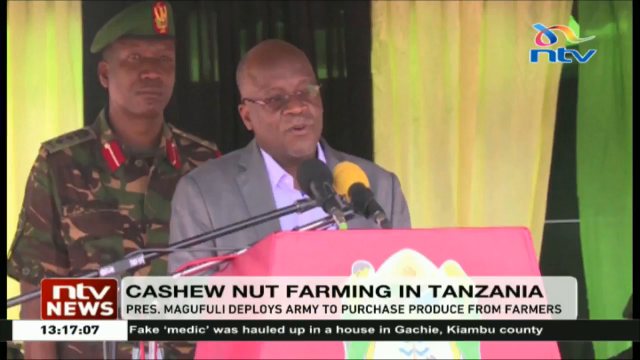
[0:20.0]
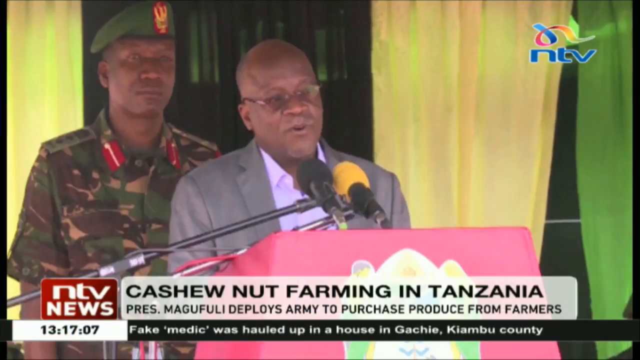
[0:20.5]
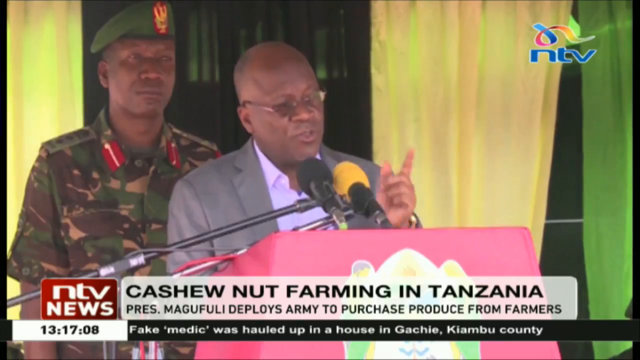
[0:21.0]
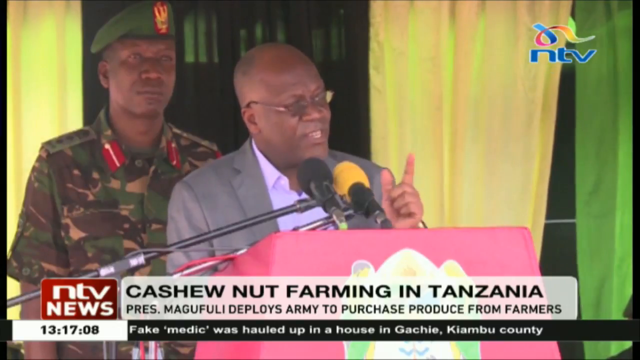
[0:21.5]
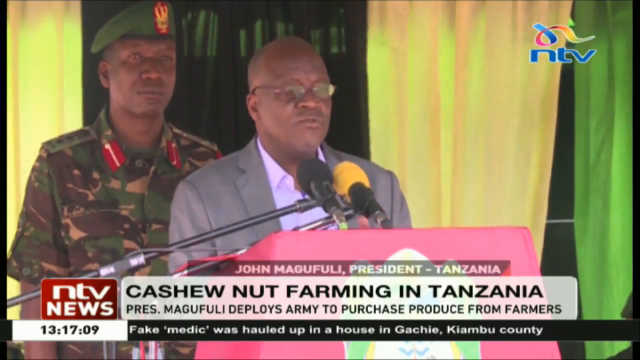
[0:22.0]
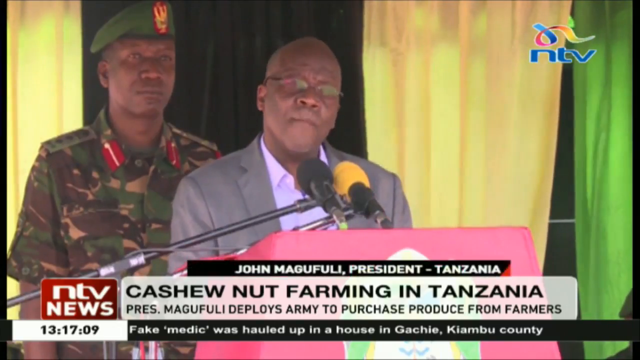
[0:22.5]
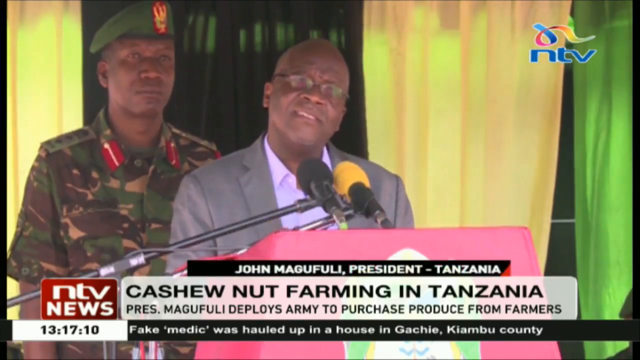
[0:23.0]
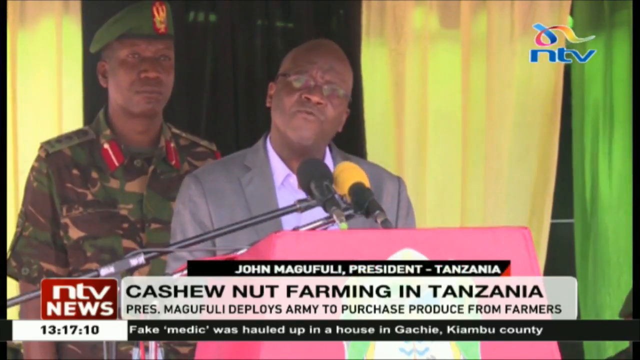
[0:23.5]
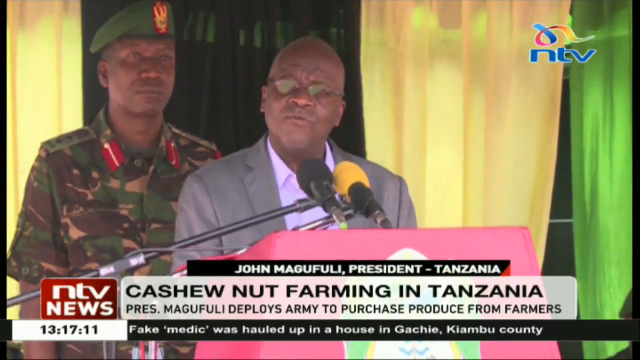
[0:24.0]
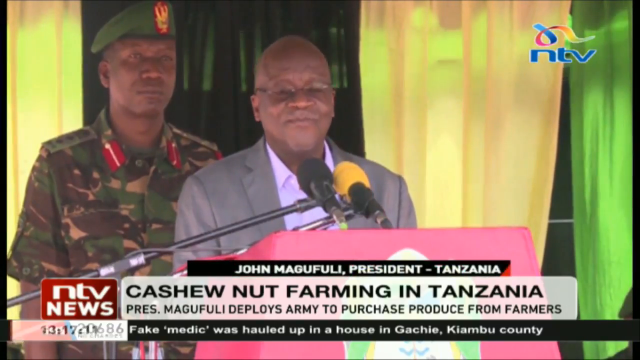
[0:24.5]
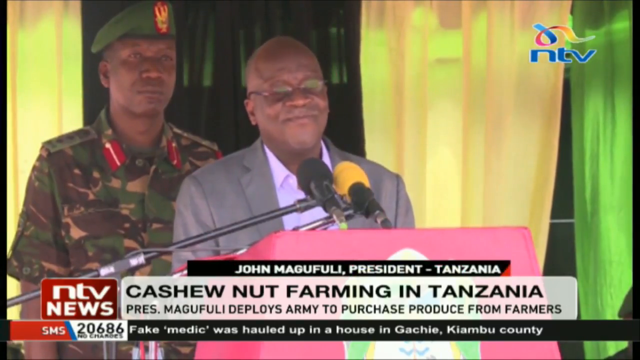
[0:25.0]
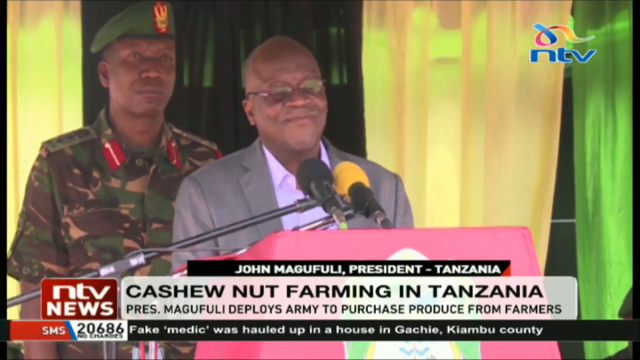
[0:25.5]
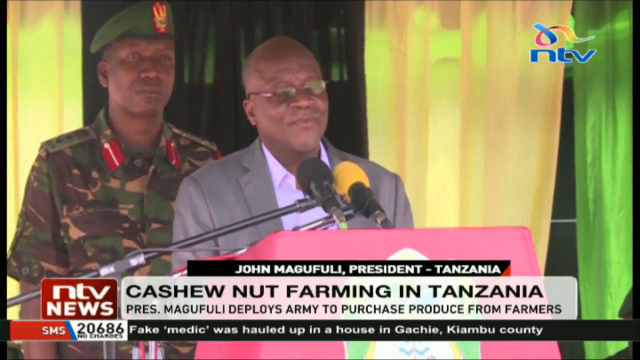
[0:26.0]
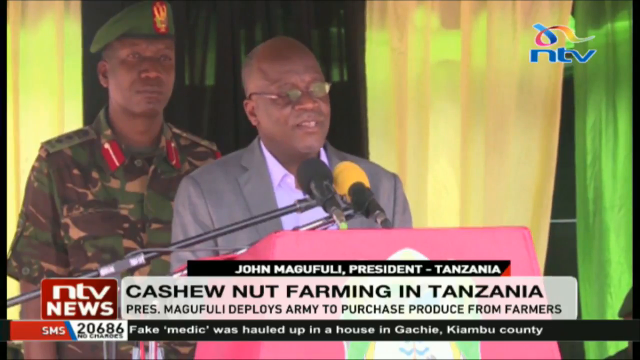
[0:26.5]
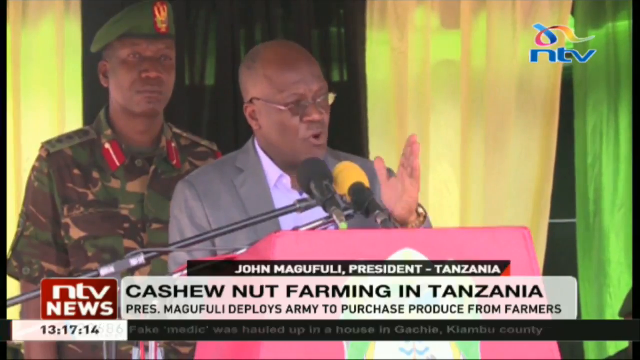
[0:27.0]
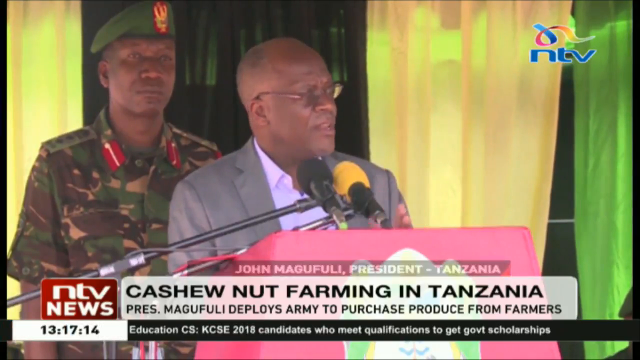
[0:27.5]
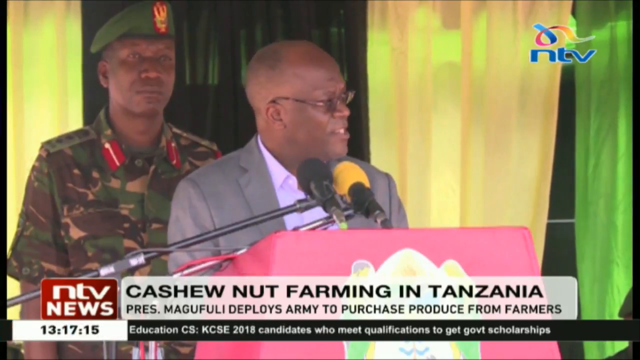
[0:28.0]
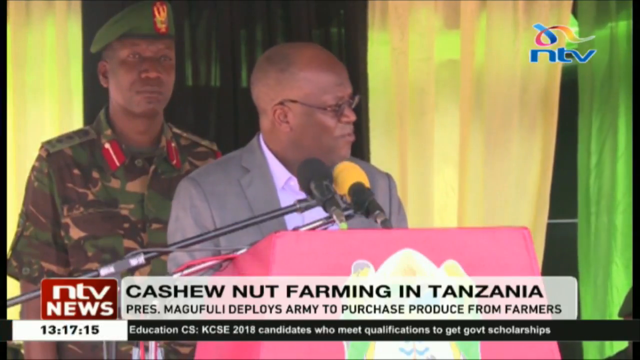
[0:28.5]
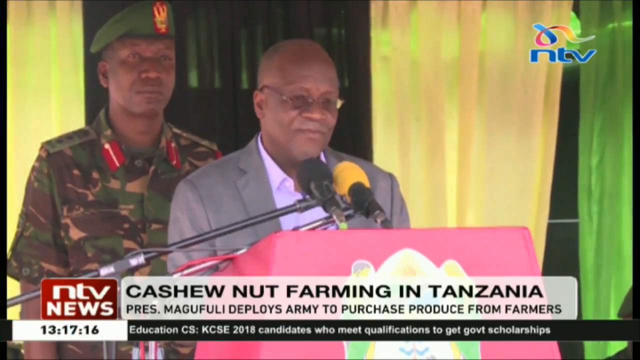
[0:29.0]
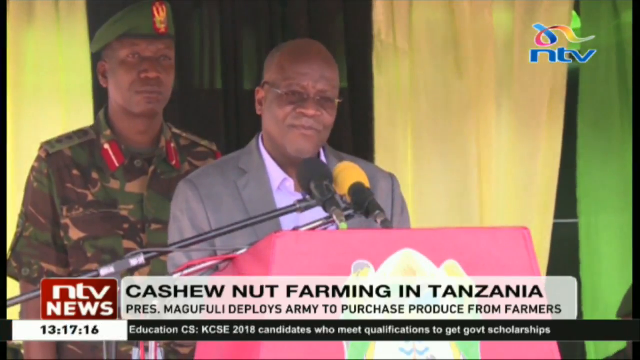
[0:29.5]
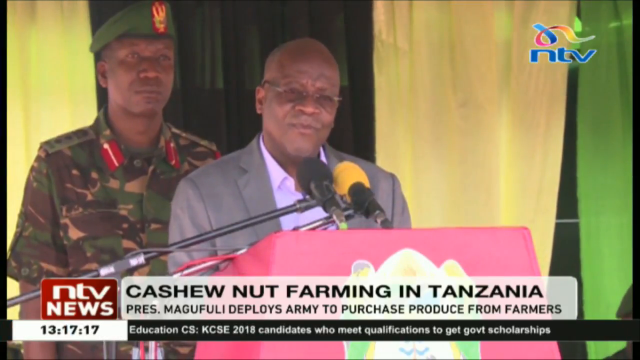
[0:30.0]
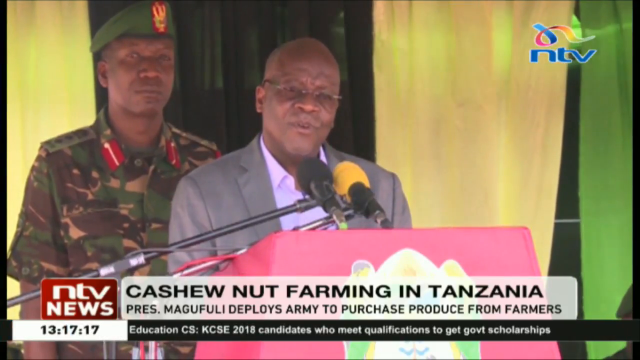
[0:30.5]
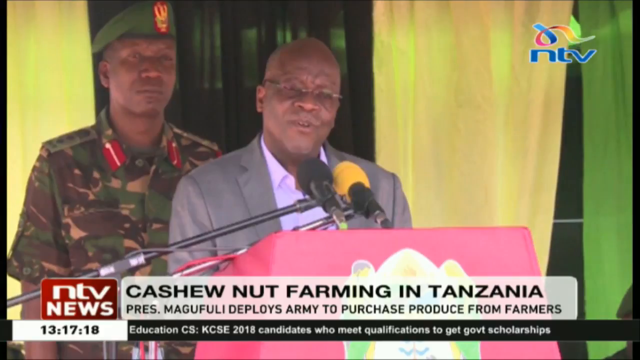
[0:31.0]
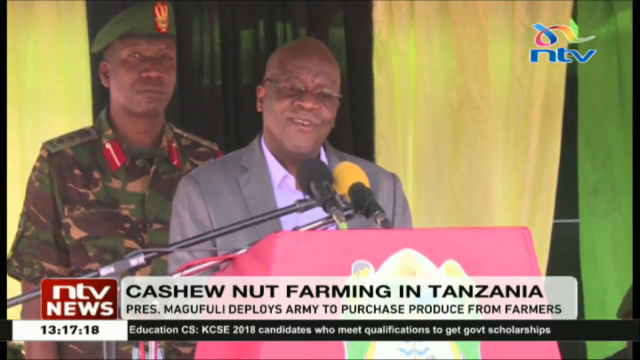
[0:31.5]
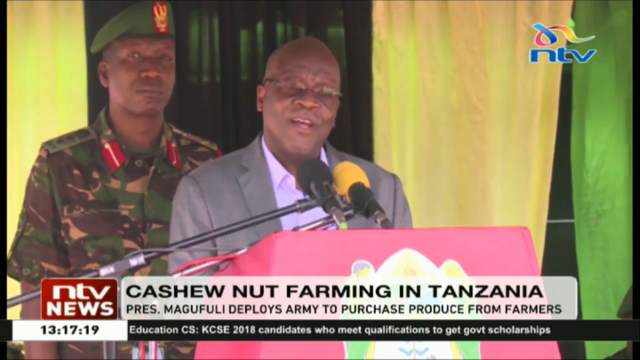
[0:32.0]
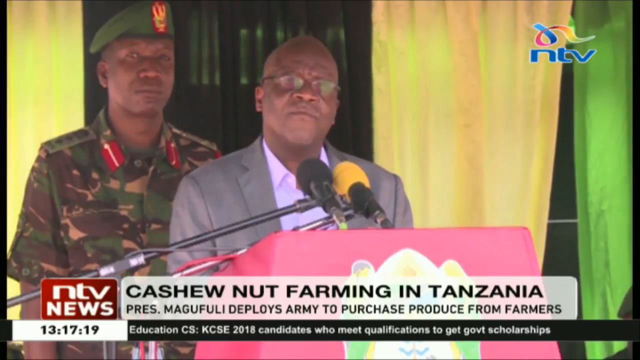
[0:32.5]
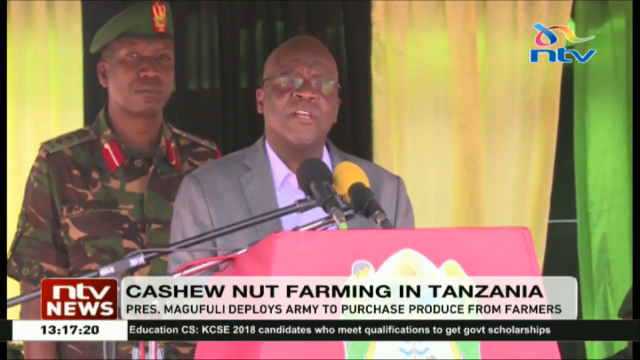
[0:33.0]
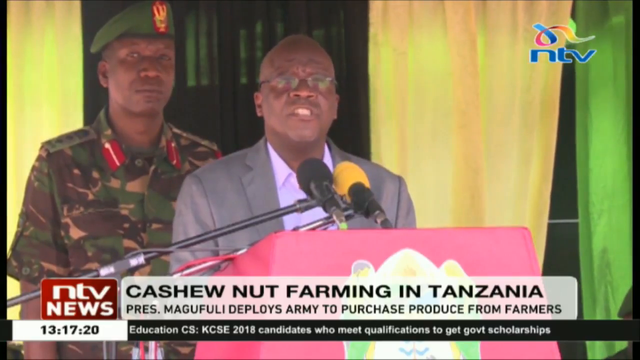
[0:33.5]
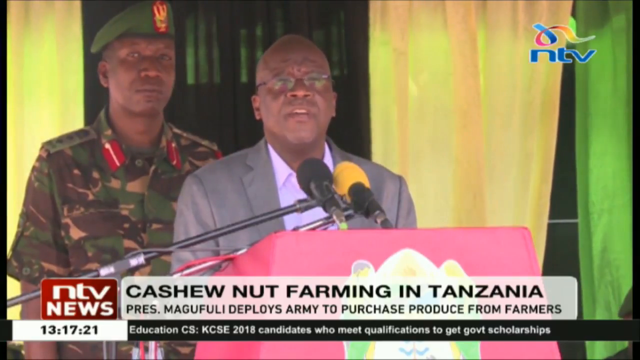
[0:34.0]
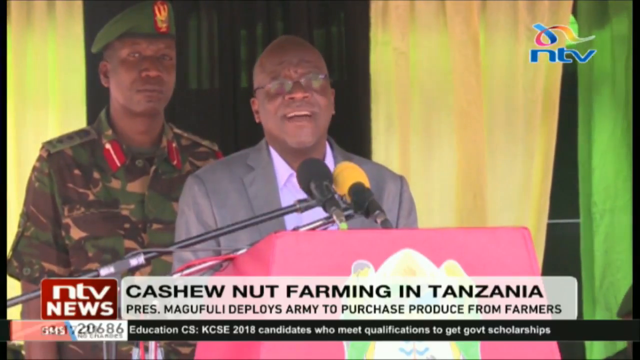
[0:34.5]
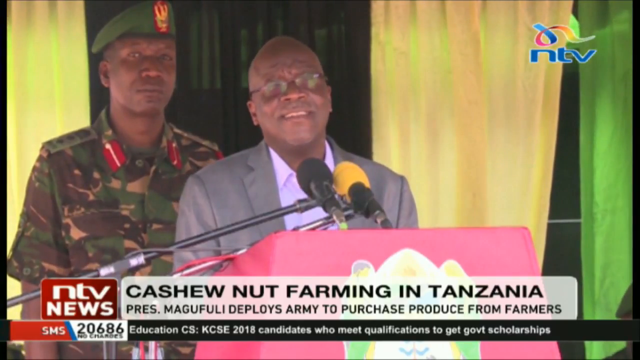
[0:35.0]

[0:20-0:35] John Magufuli, the president of Tanzania, addresses the people, standing behind a pulpit with two microphones in front of him. A soldier is standing behind him, and by his side are yellow and green curtains. The president wears a gray suit, a white shirt and eyeglasses. The headline is still about cashew farming in Tanzania, with the president deploying the army to purchase farm produce from farmers.